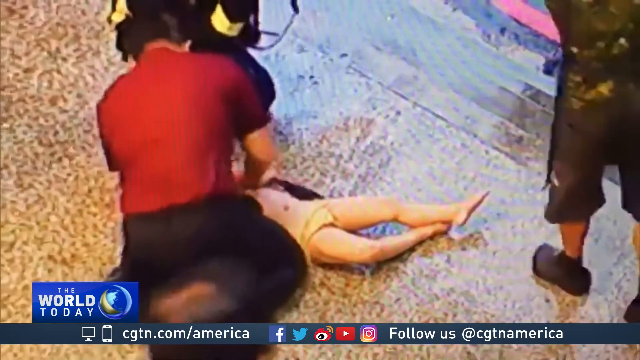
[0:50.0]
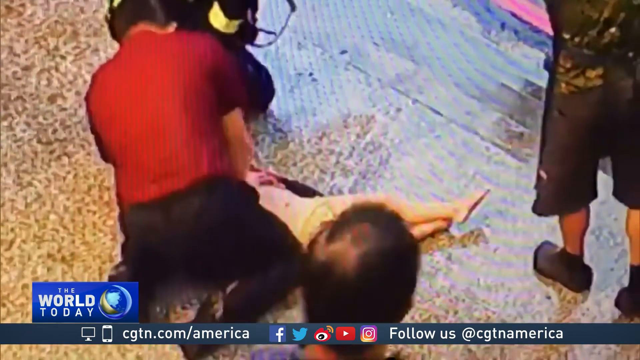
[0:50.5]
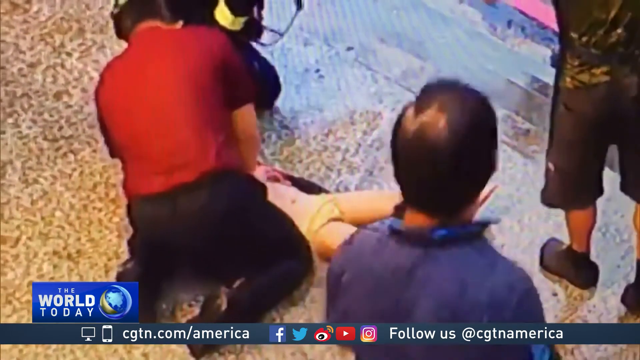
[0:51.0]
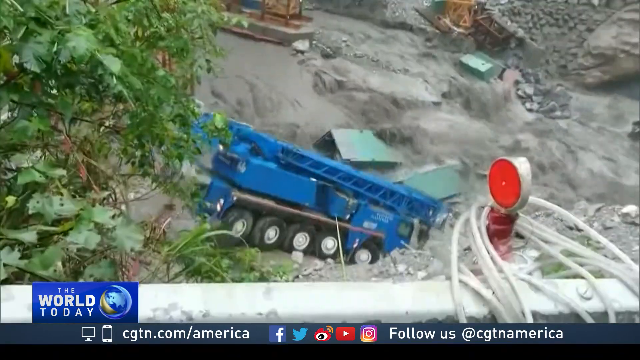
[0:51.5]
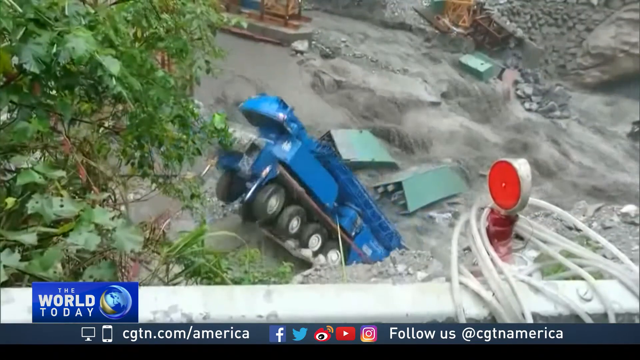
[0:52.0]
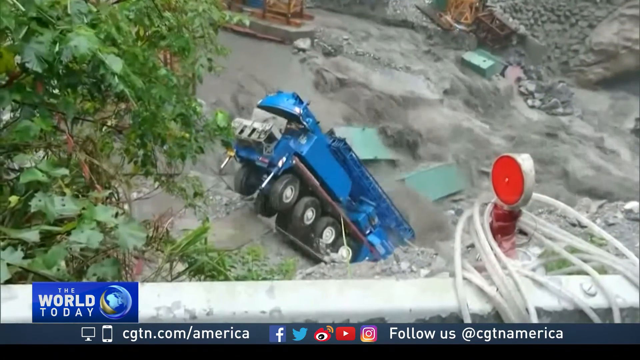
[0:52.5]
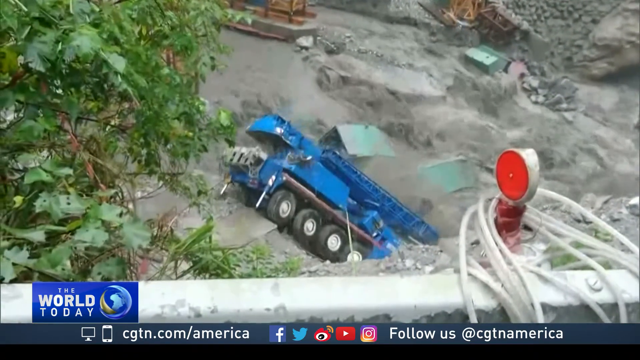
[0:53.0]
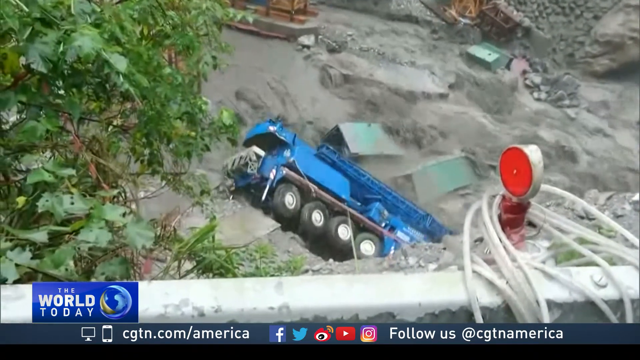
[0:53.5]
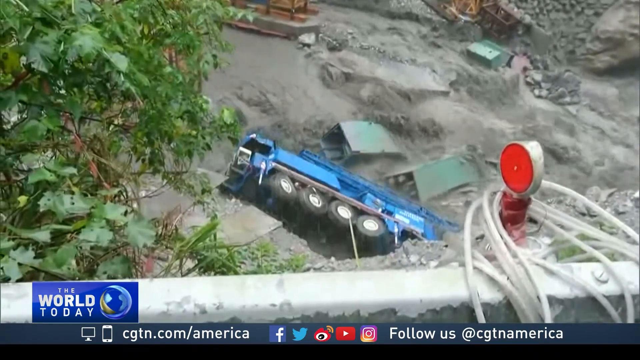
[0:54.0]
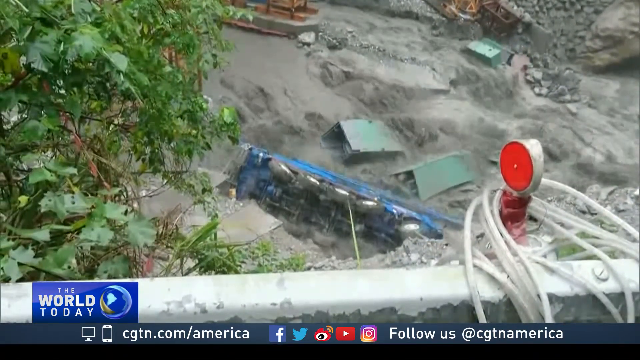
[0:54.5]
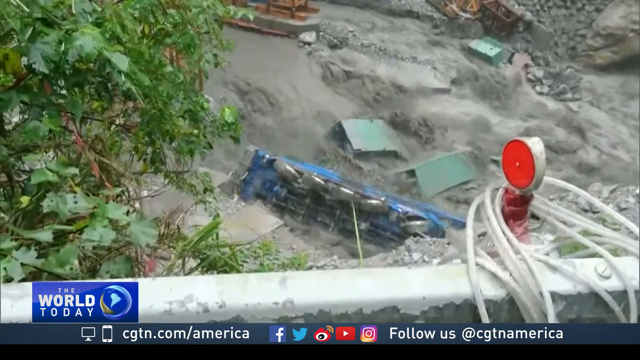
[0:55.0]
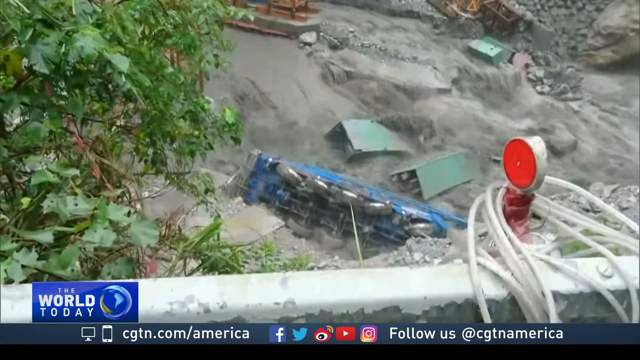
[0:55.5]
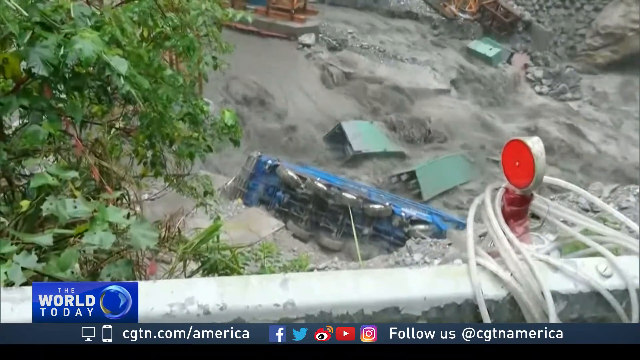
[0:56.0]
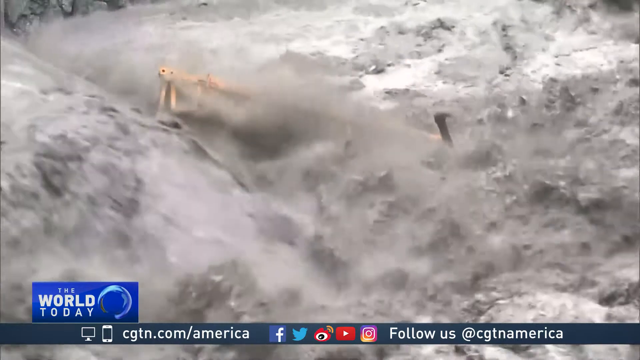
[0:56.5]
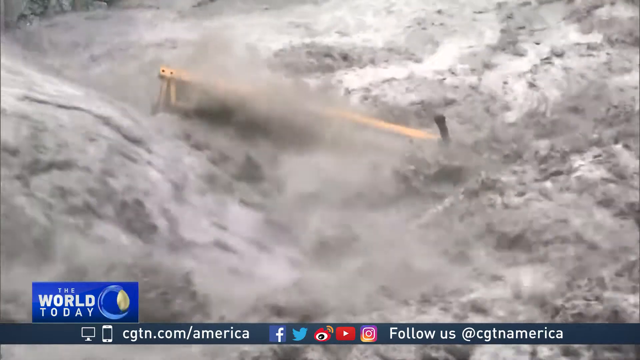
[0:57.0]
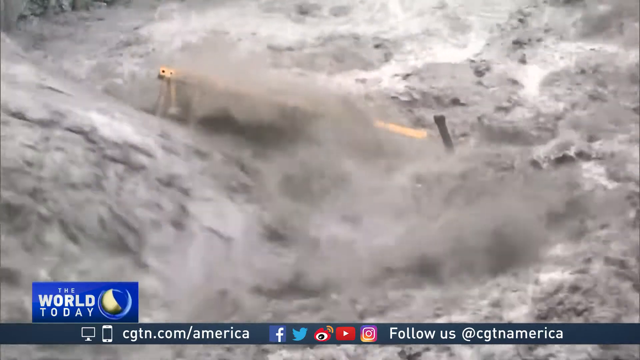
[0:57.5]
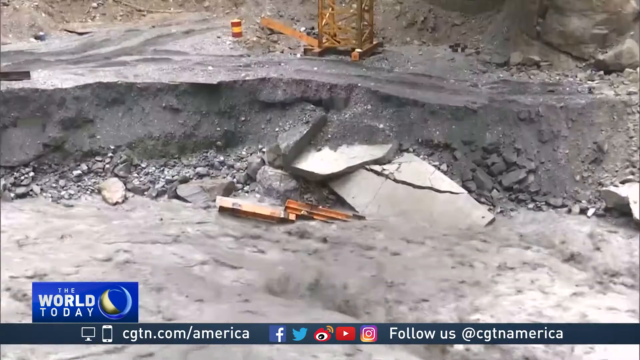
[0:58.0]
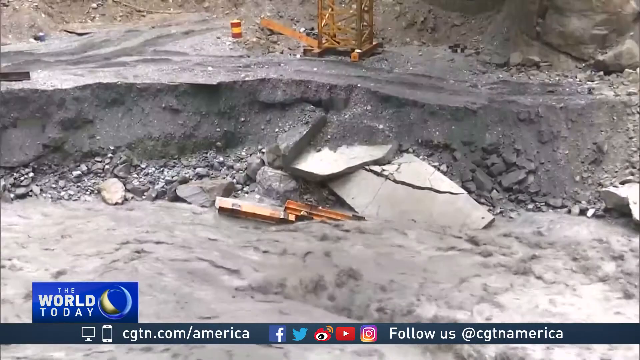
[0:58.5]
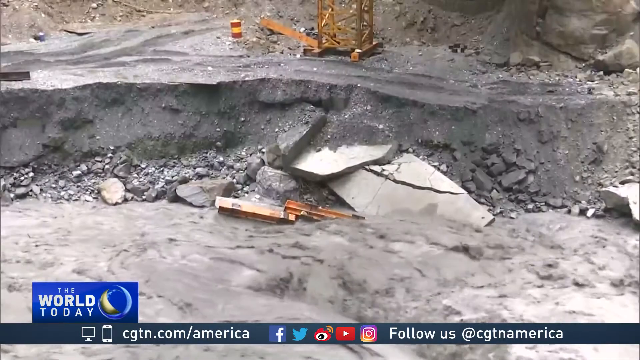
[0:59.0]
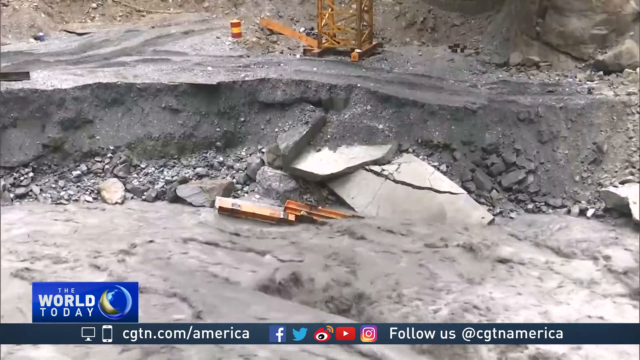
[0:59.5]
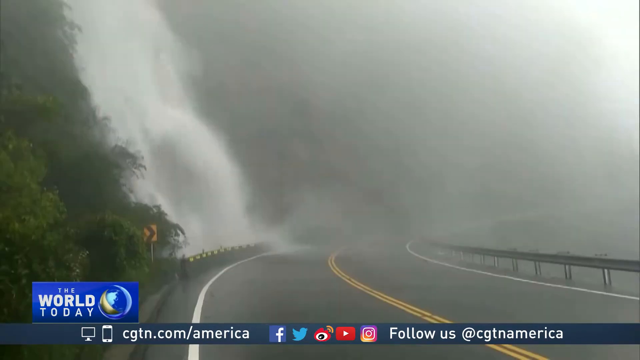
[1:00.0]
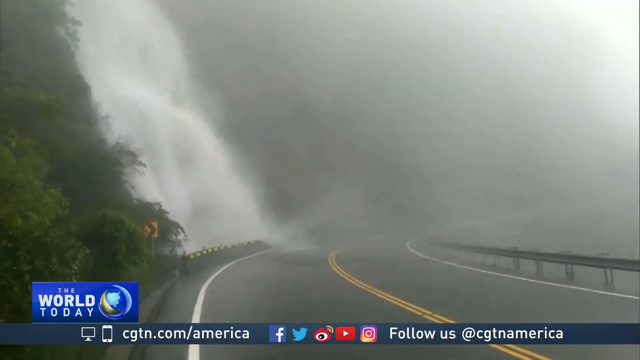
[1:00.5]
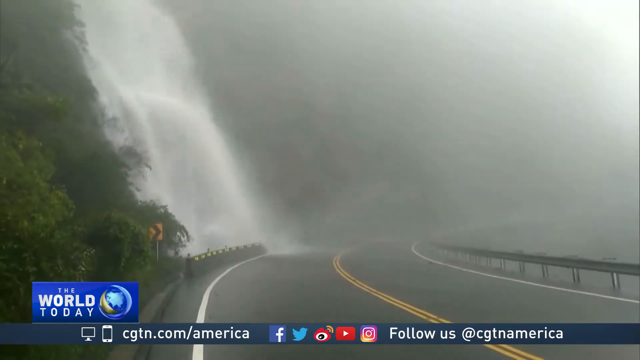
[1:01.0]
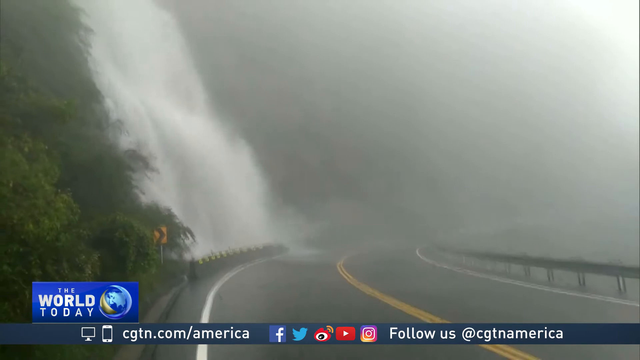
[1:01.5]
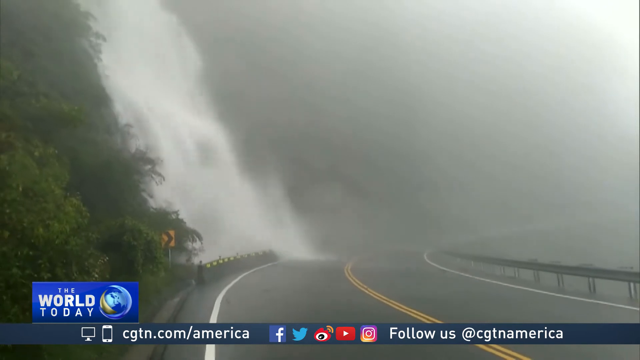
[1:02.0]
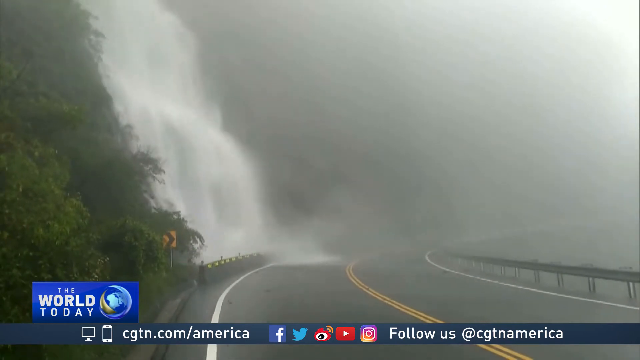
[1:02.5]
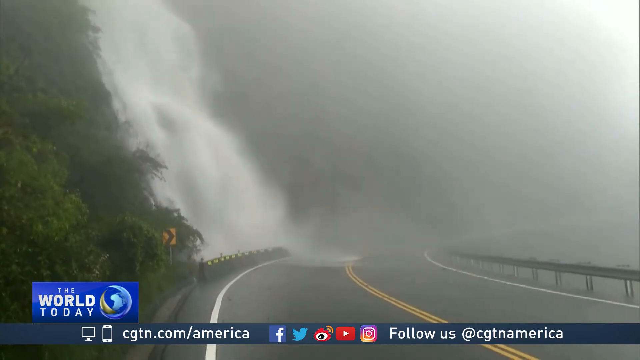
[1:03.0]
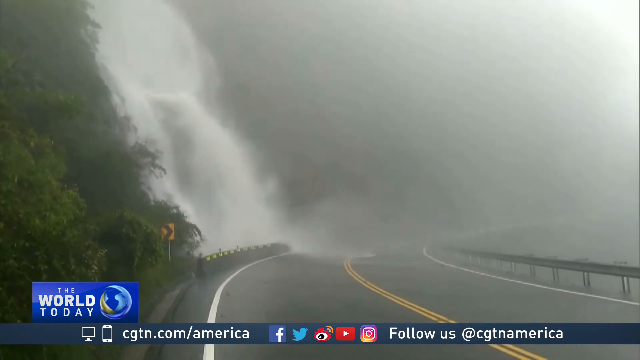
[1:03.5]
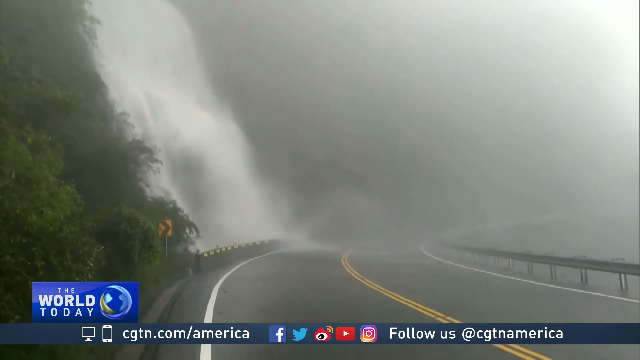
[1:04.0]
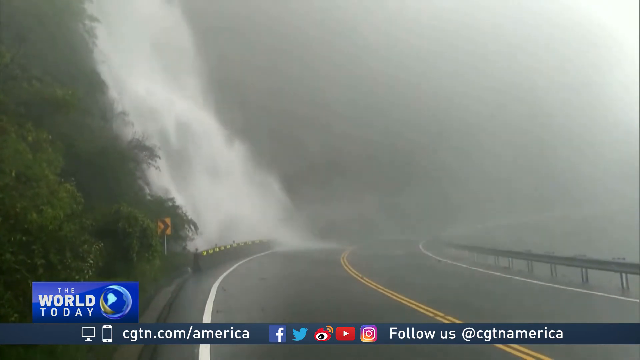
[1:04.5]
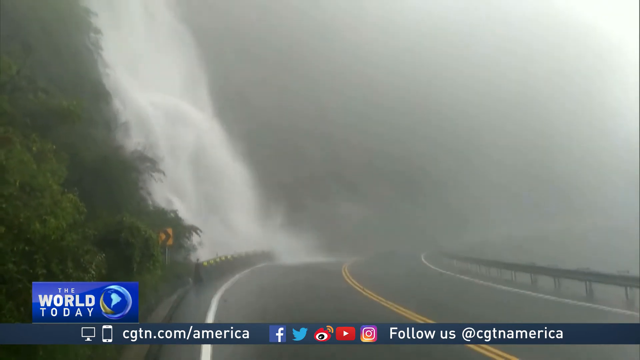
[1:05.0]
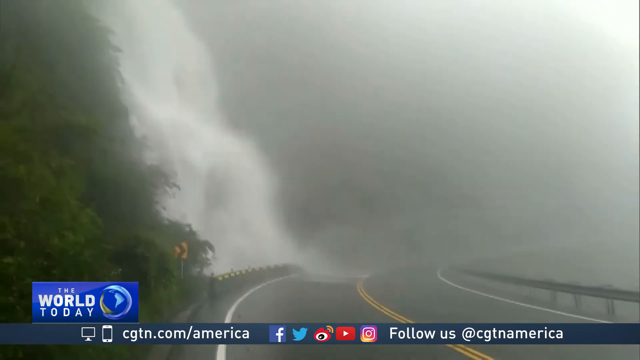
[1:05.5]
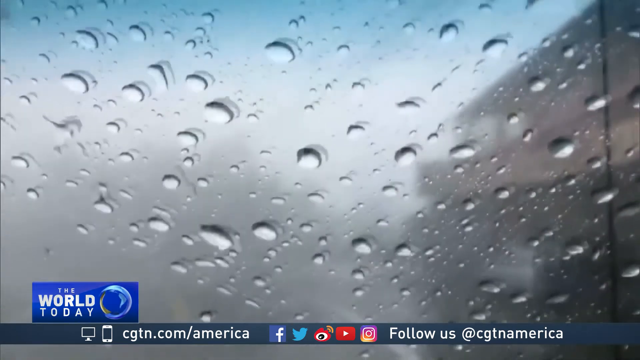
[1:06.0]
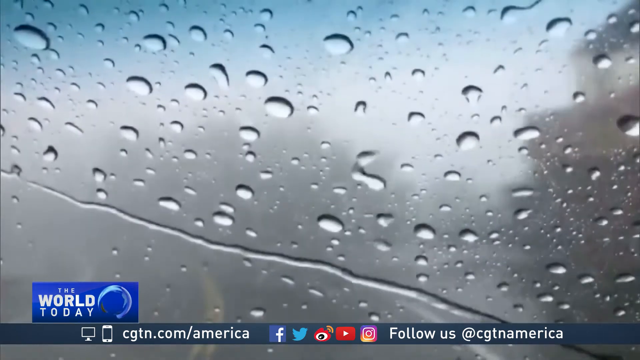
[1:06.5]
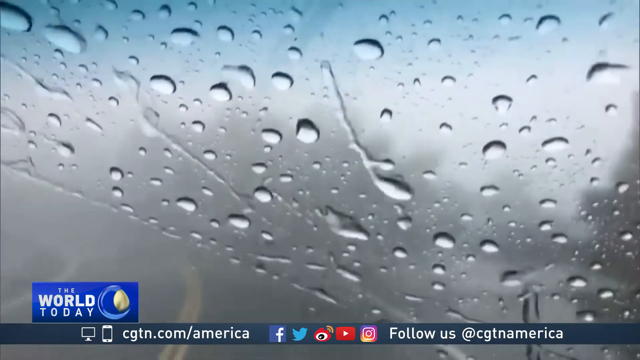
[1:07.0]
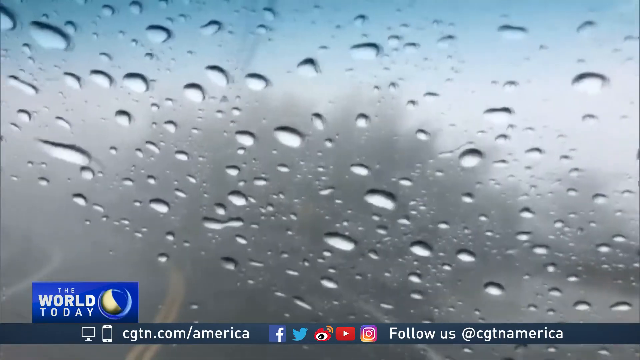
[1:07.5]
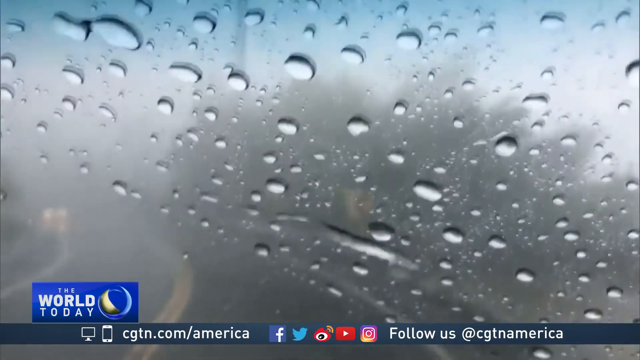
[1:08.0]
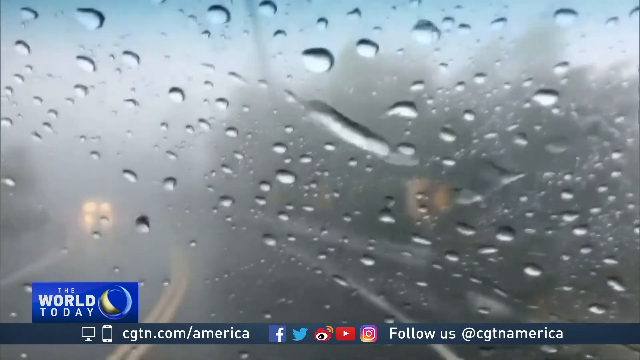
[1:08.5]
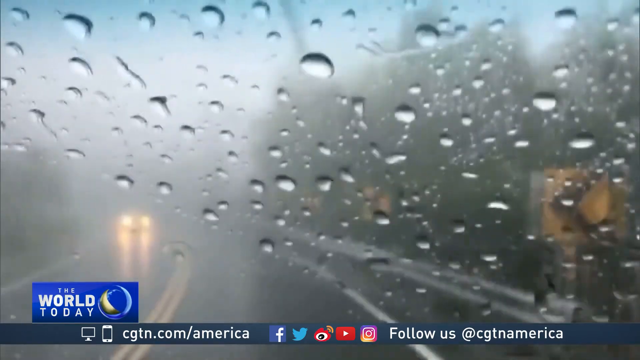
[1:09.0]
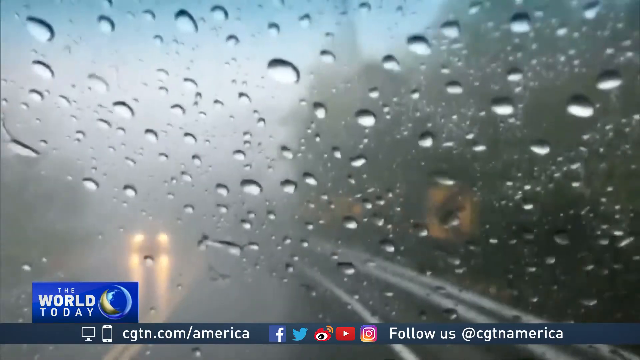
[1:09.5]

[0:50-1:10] Another man walks up to that scene. The view switches to a ledge looking down at floodwaters, where a large blue truck, almost resembling a fire engine but blue, with many wheels on its side, topples into the floodwaters and falls on its back into the water; a green tree is on the left side. A different view shows lots of floodwaters close up, then a view of the floodwaters in which the ledge is visible. Next, a large waterfall on the left pours onto an asphalt road with yellow lines down the middle, the water pounding it. Finally, a close-up shows a windshield covered in rain and water, as if seen from behind it; a car with its headlights on approaches on the left side, the view out is barely visible through the water, and no windshield wipers are moving.